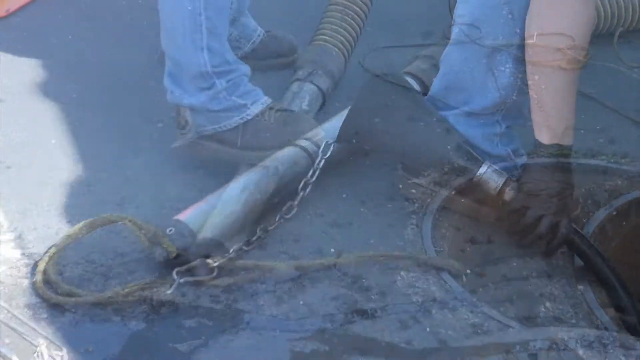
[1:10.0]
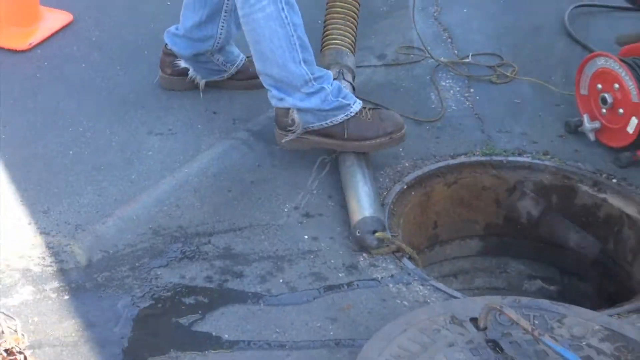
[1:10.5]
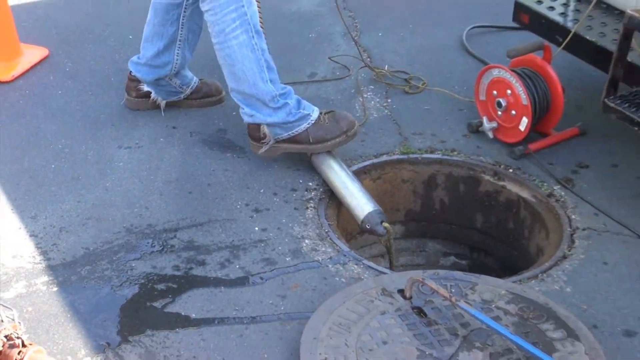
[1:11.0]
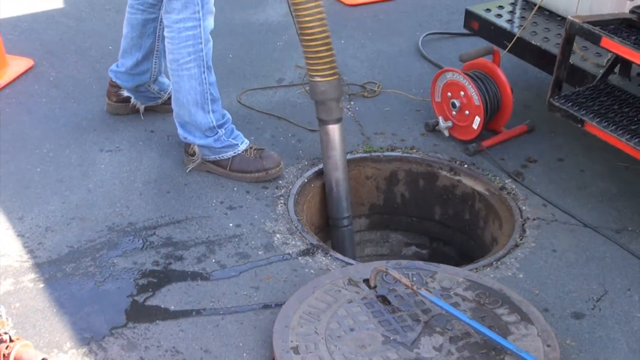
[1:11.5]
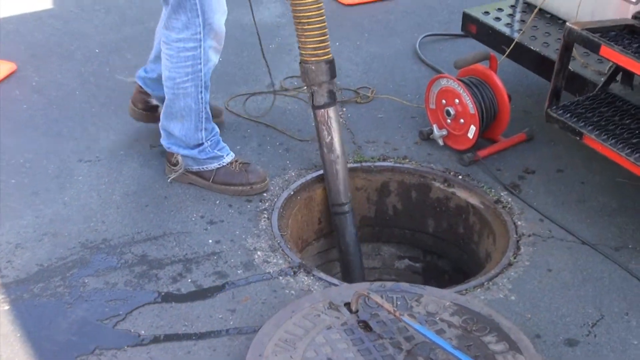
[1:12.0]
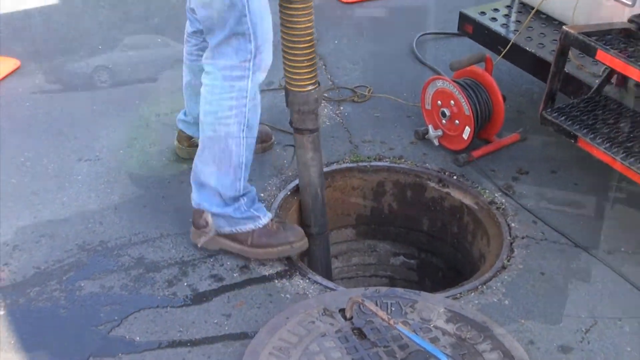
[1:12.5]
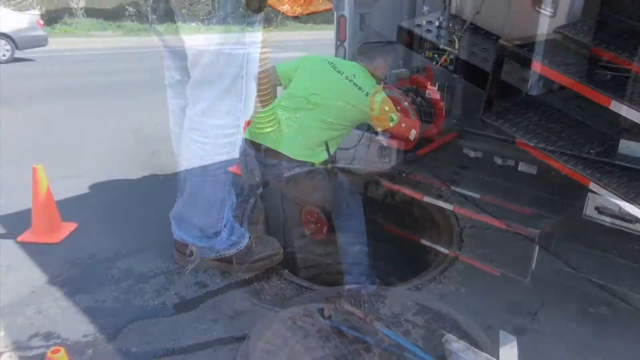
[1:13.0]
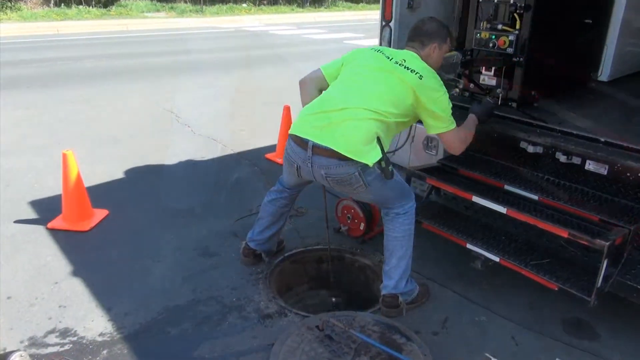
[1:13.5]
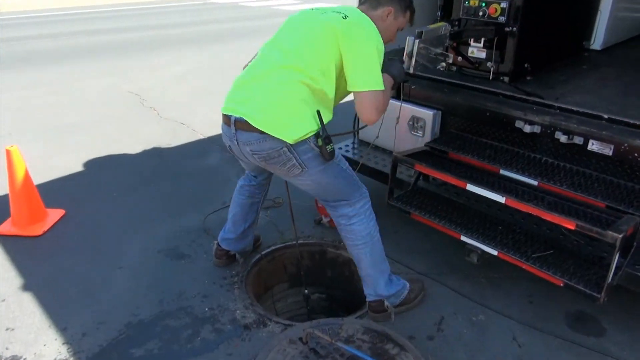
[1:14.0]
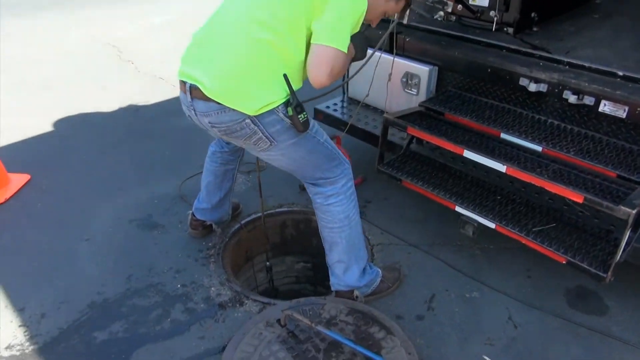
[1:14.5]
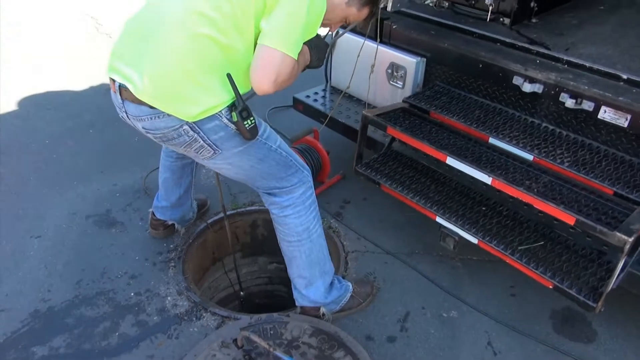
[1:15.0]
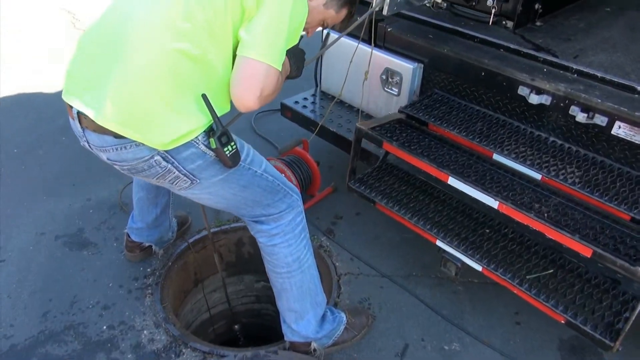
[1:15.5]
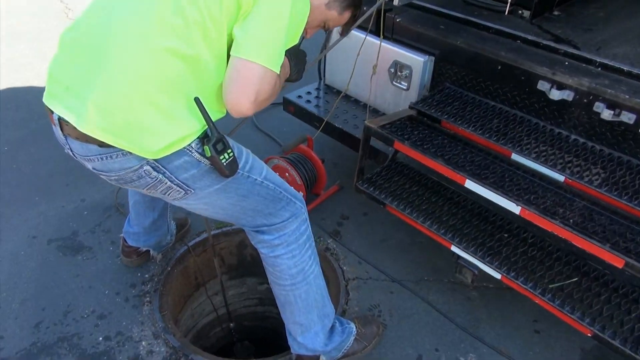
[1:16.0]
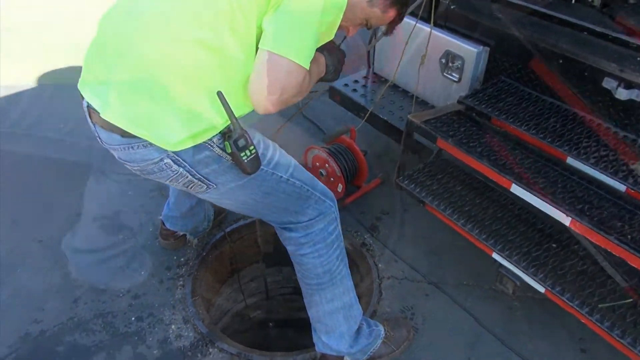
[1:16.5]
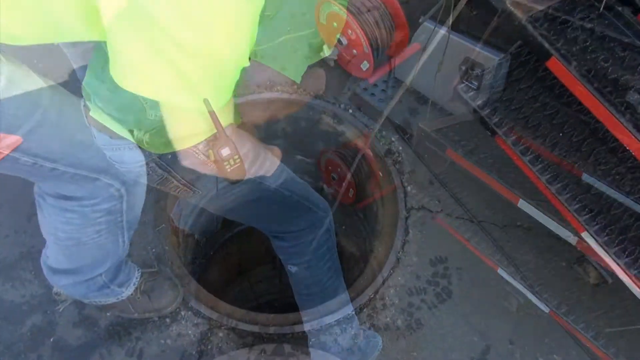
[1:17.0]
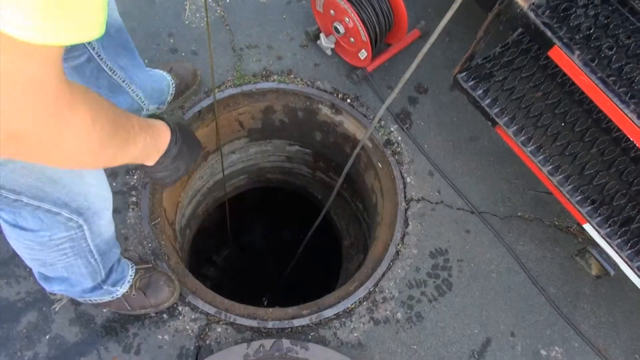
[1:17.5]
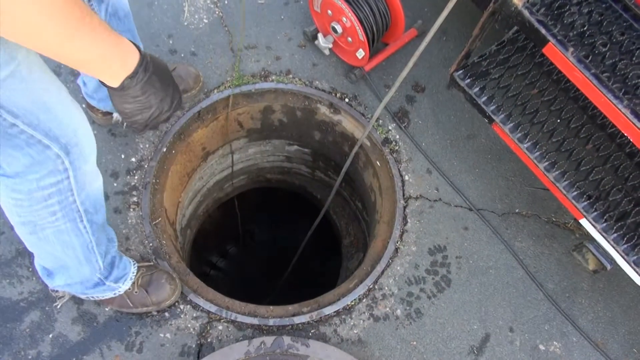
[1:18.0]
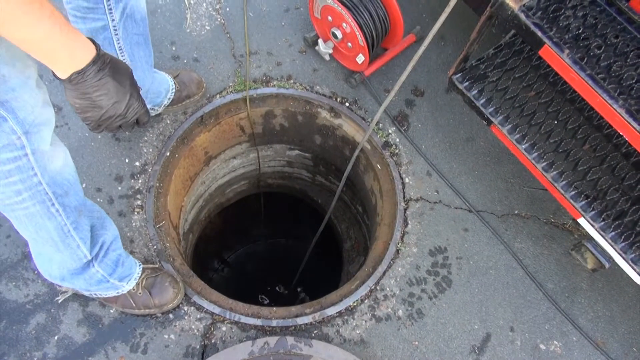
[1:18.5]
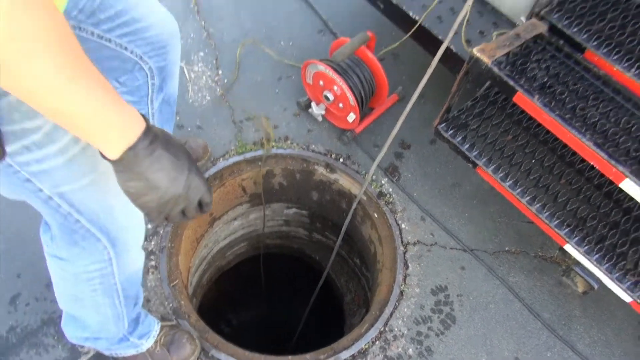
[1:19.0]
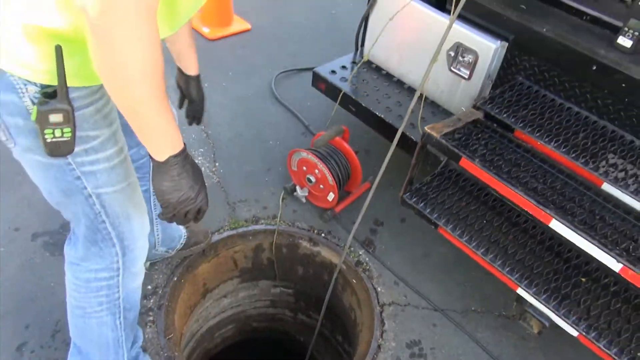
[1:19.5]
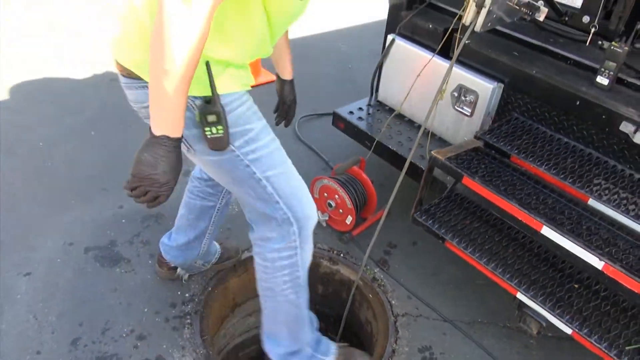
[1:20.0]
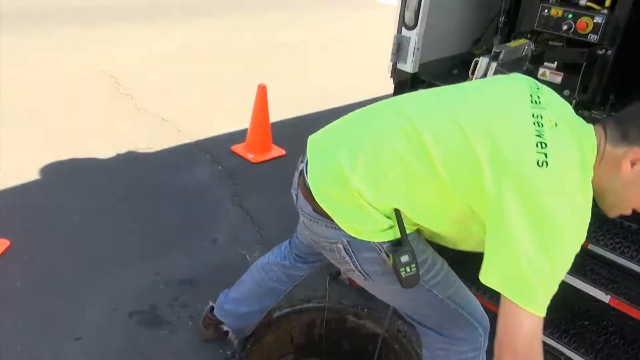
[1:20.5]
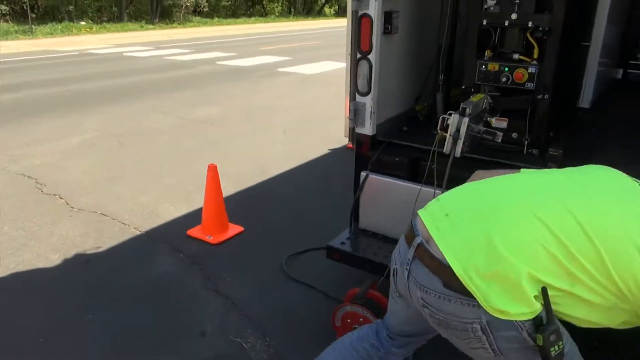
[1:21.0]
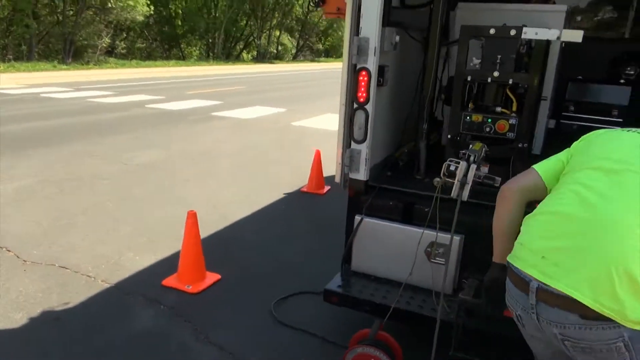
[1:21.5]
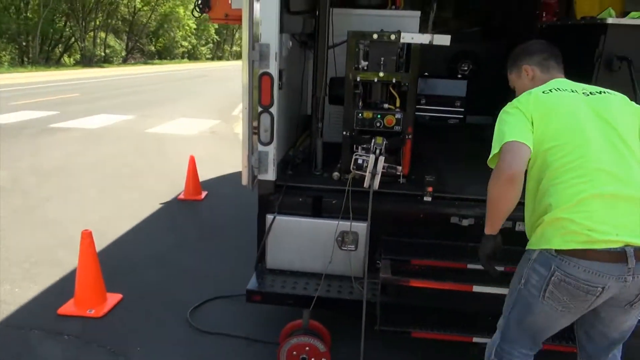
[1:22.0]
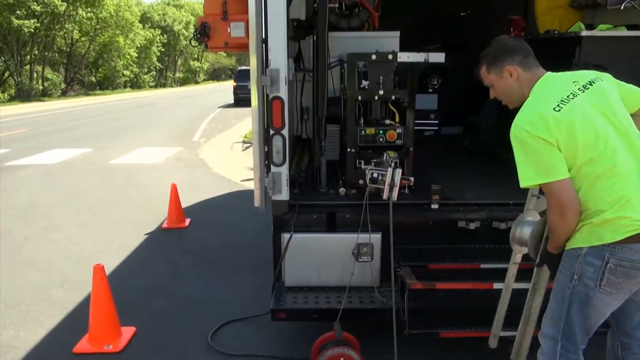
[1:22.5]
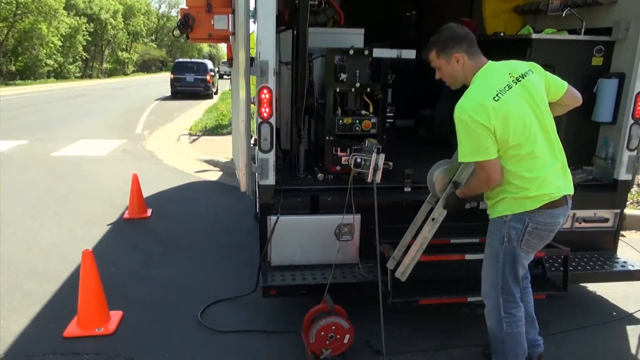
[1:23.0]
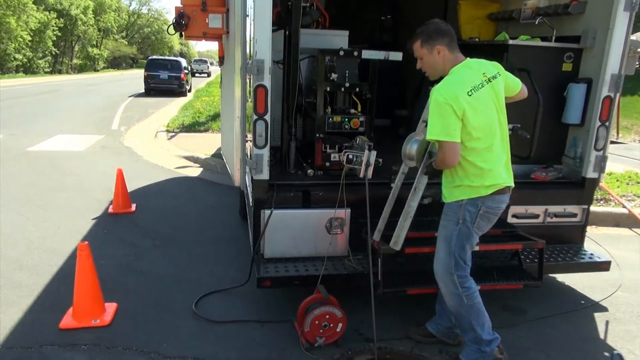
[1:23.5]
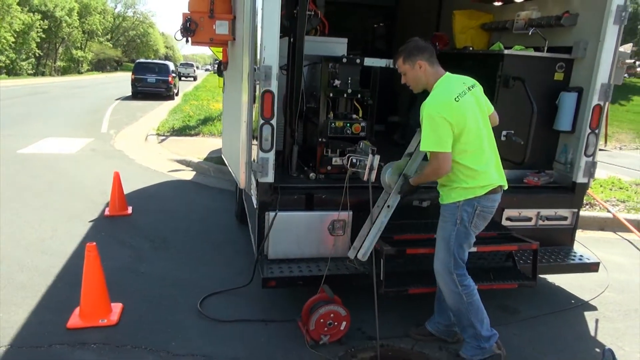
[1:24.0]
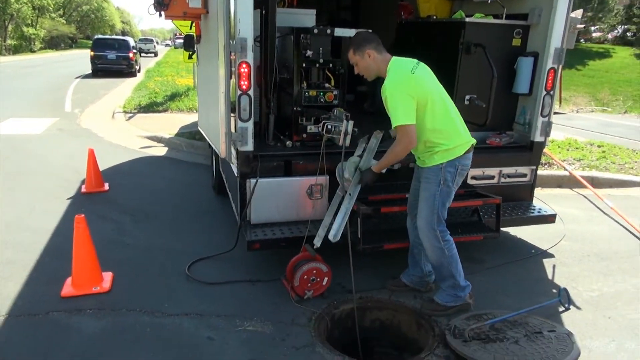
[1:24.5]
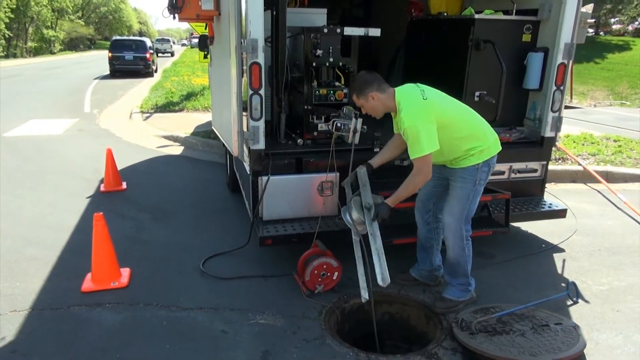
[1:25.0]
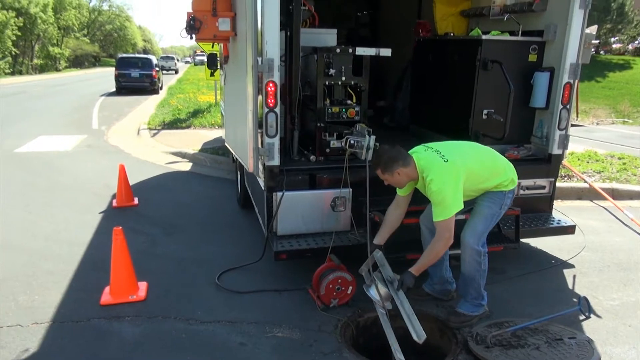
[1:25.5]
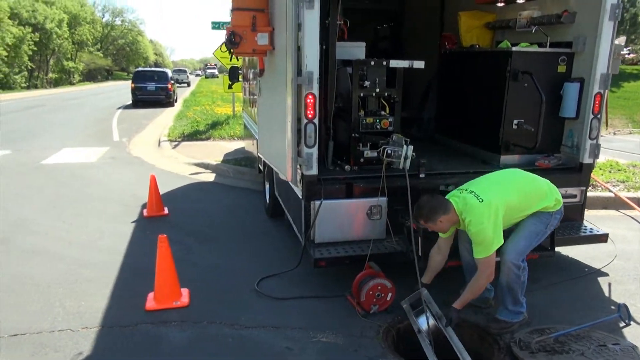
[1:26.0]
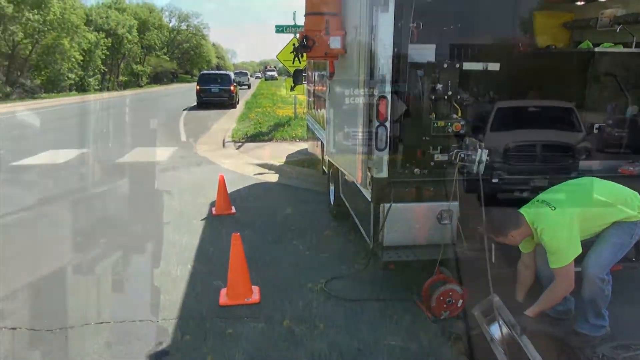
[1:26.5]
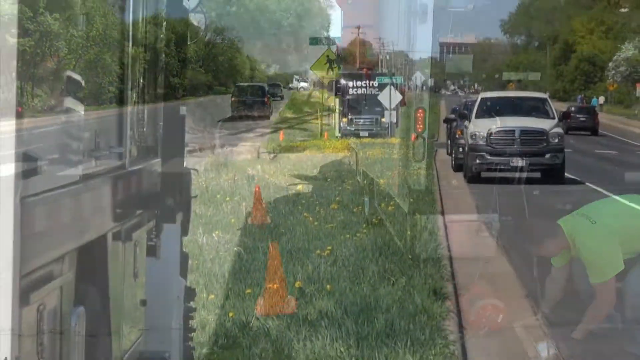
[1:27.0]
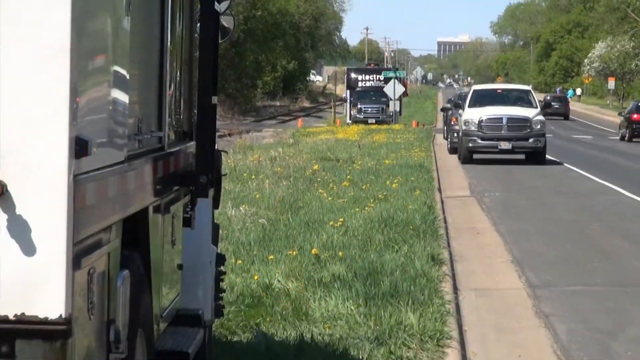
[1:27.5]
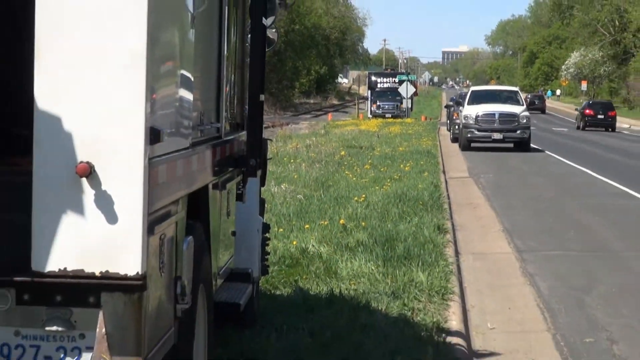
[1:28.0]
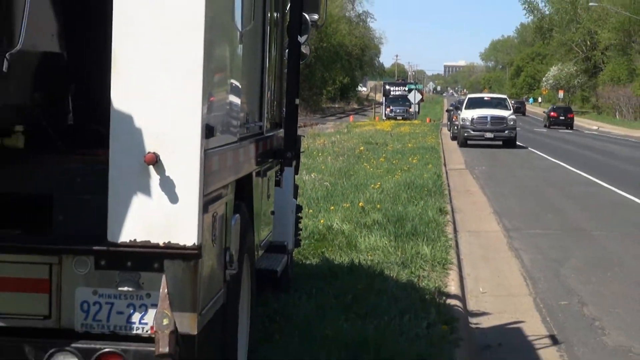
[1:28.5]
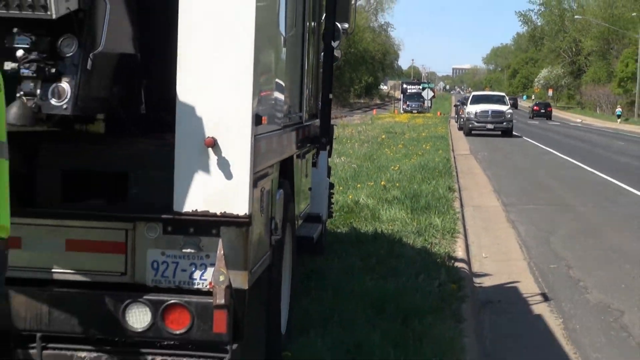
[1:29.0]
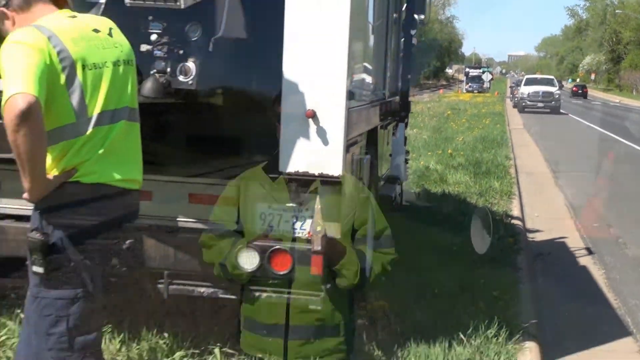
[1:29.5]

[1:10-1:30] The workers have hooked a part onto the hose and sink it back down into the sewer line, where a lot of water is flowing. They wear neon green shirts, and there is a machine. Cautionary cones are set out to alert drivers, and on the left some cars are parked in the distance as he works. The view then looks over to a building in the far distance under sunny skies, with a white truck and cars going down the road and someone walking or jogging on the sidewalk on the right side of the road. The truck's license plate is visible. The sewer line is shown again as the machine is dipped into the water, possibly an electrical machine, and lights flash on some of the equipment. The shot ends on the hose, where the worker has hooked on a funnel-looking thing.